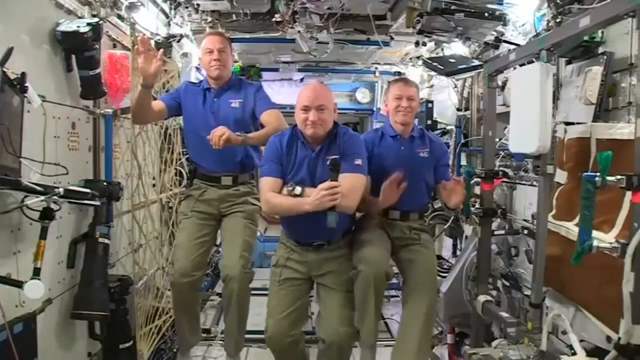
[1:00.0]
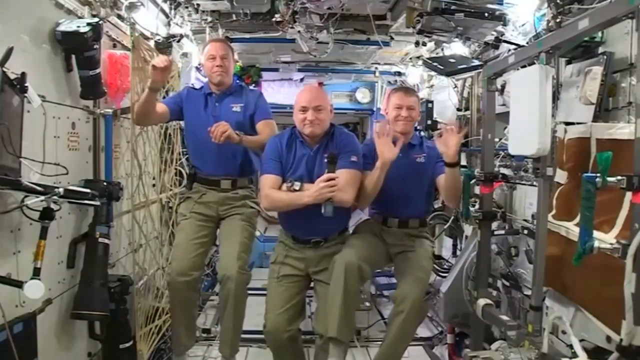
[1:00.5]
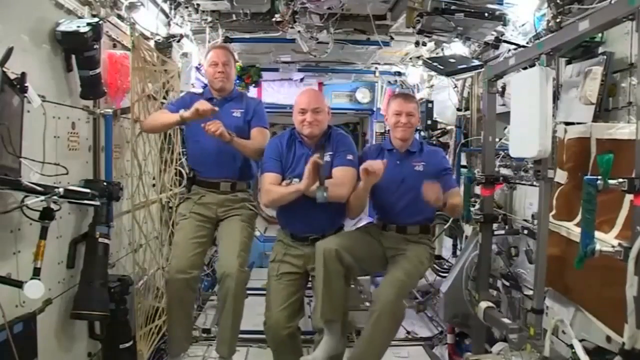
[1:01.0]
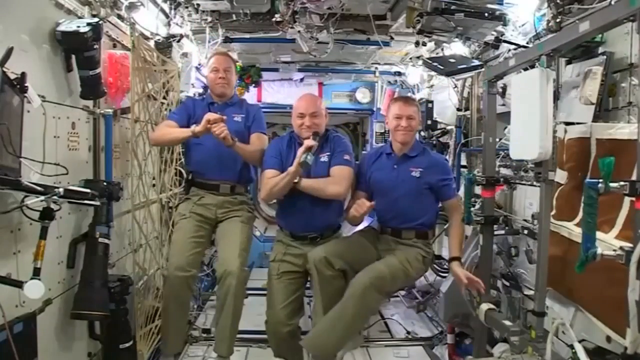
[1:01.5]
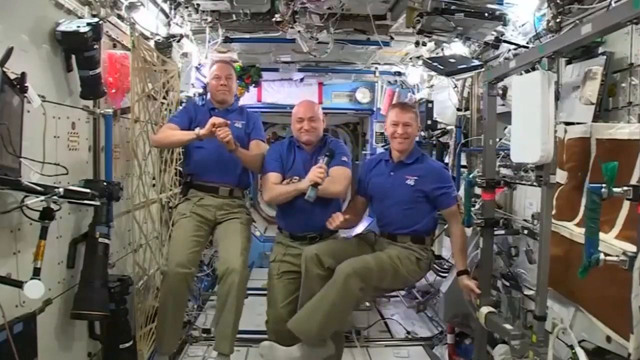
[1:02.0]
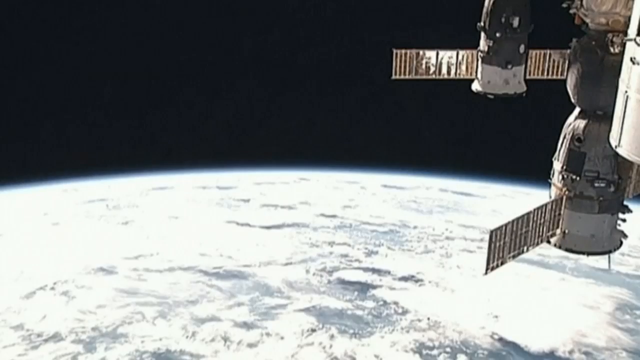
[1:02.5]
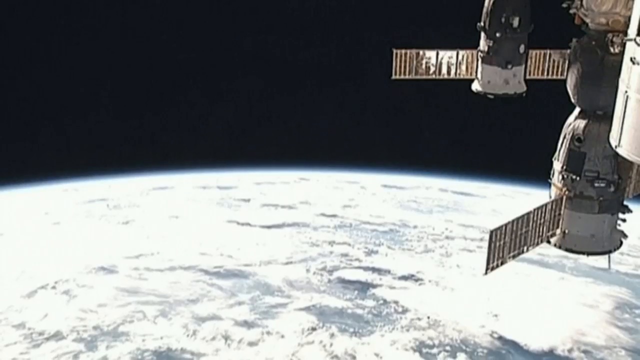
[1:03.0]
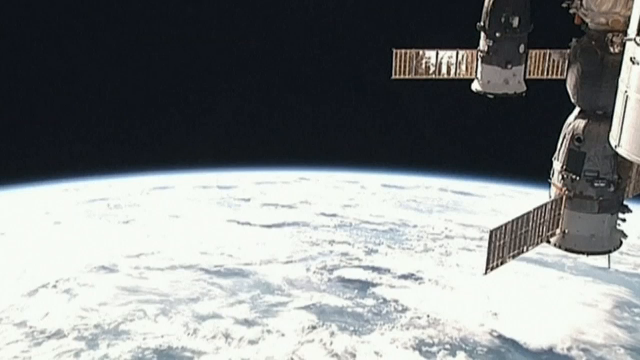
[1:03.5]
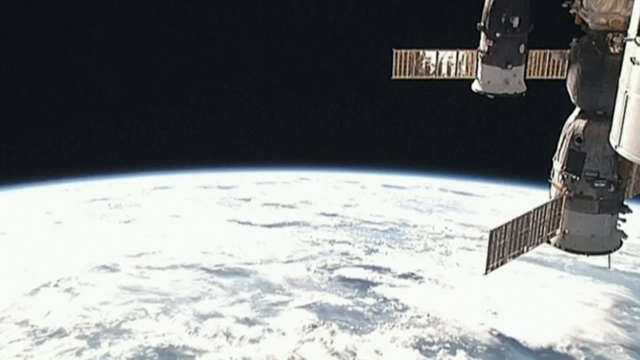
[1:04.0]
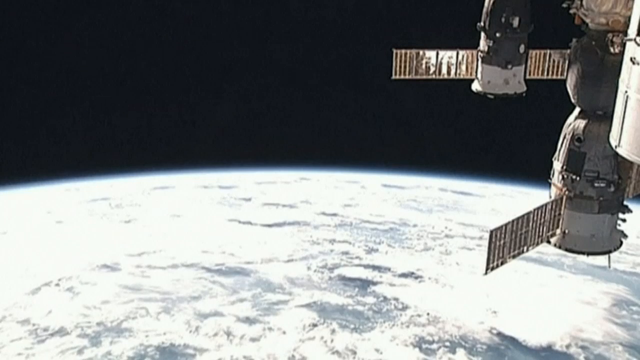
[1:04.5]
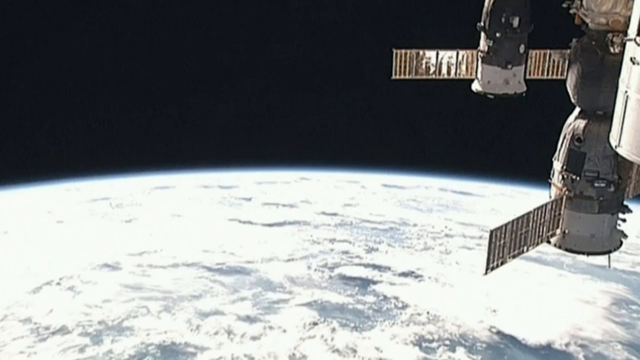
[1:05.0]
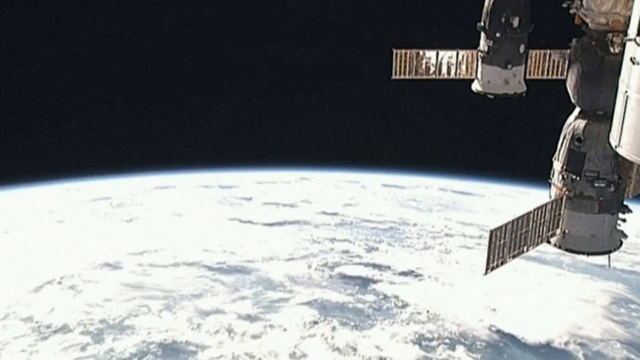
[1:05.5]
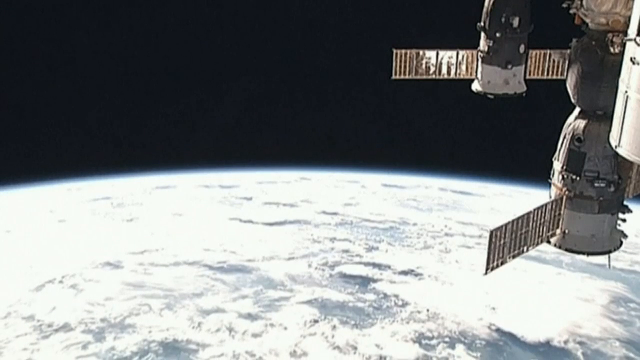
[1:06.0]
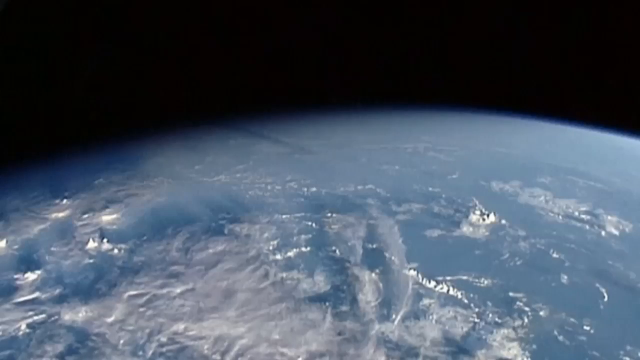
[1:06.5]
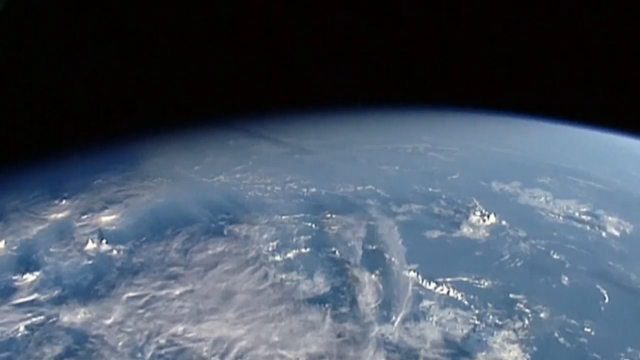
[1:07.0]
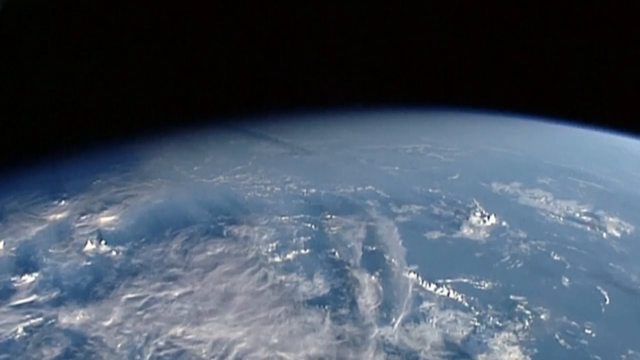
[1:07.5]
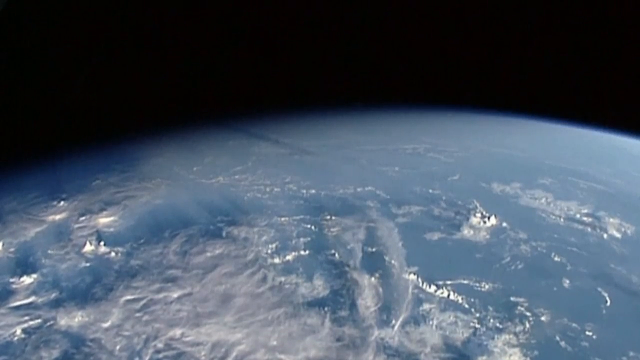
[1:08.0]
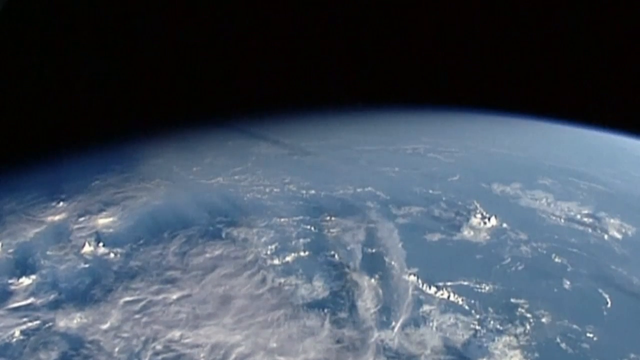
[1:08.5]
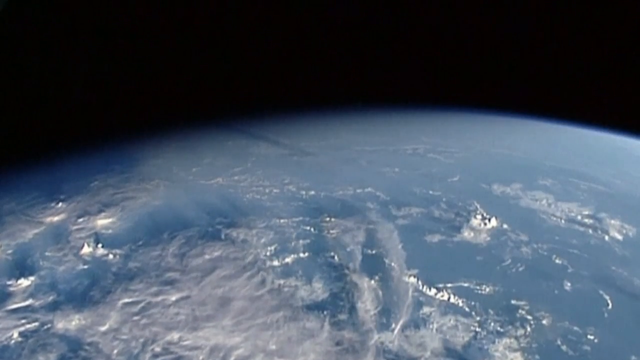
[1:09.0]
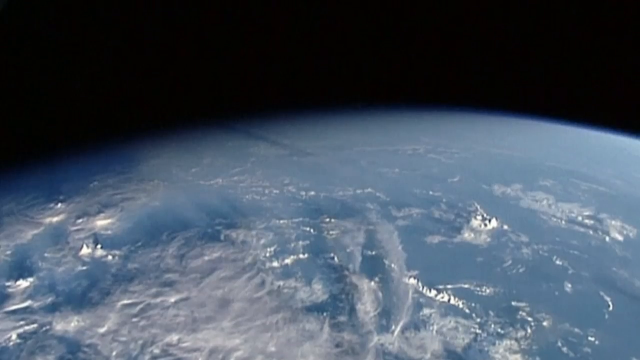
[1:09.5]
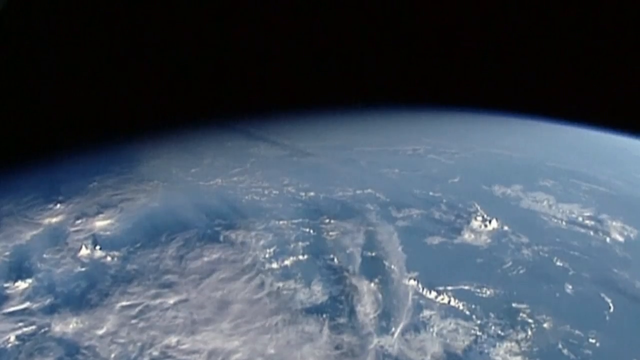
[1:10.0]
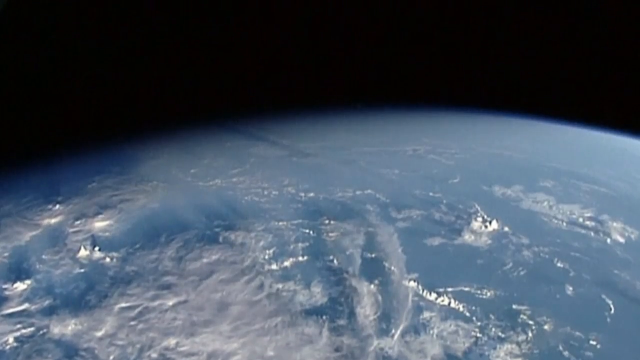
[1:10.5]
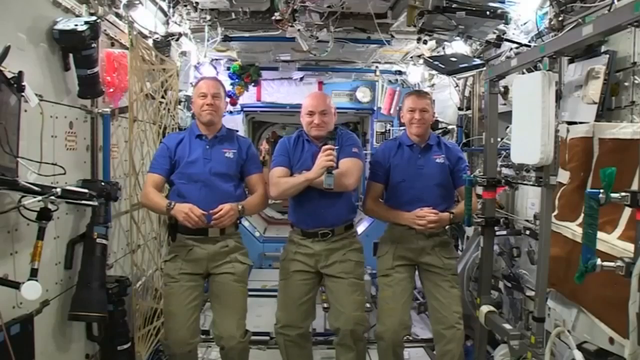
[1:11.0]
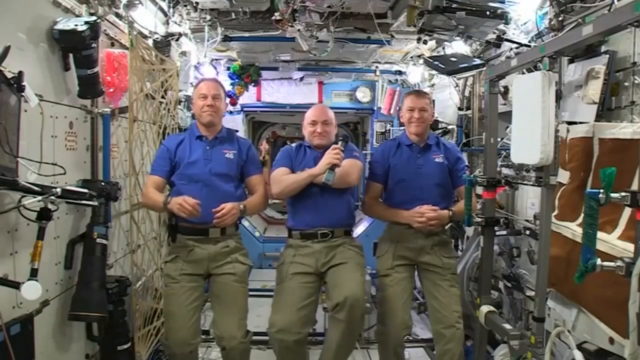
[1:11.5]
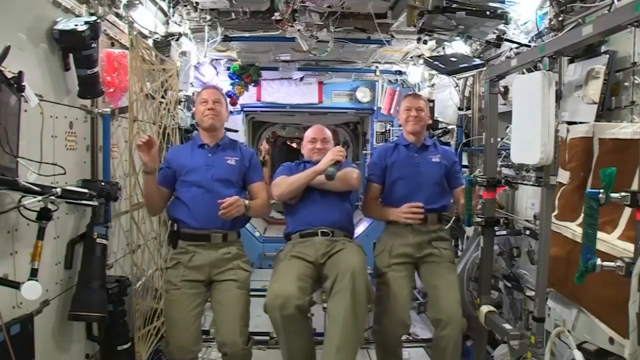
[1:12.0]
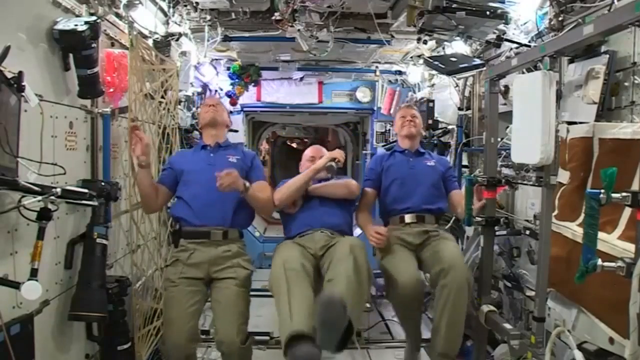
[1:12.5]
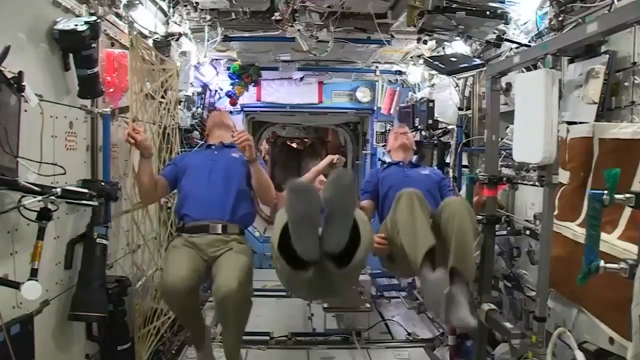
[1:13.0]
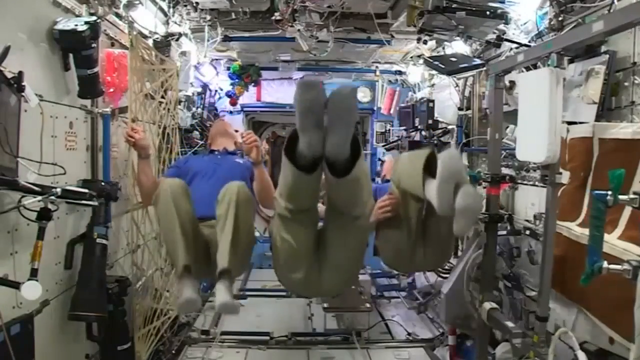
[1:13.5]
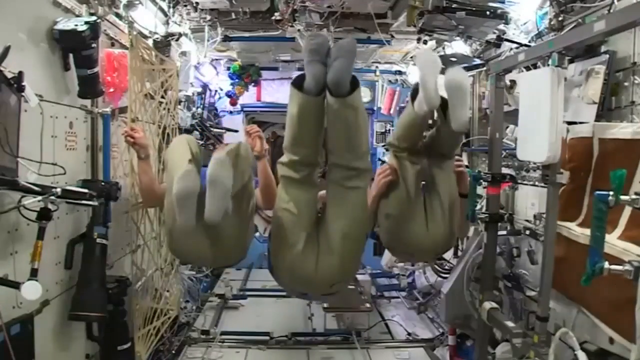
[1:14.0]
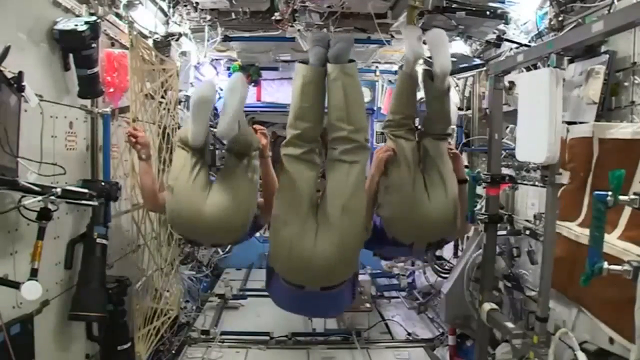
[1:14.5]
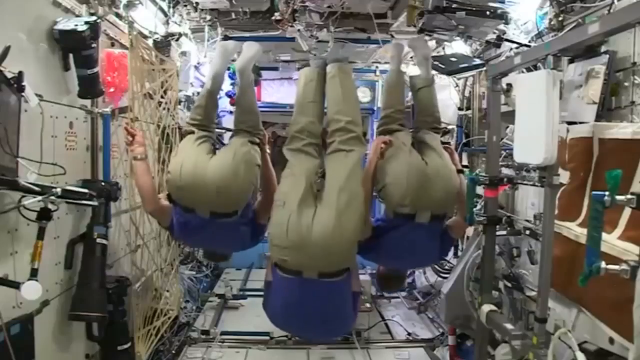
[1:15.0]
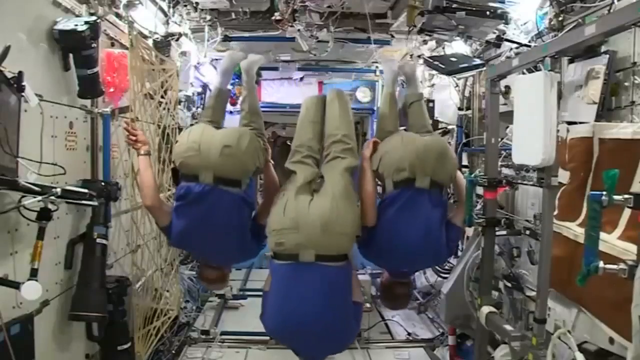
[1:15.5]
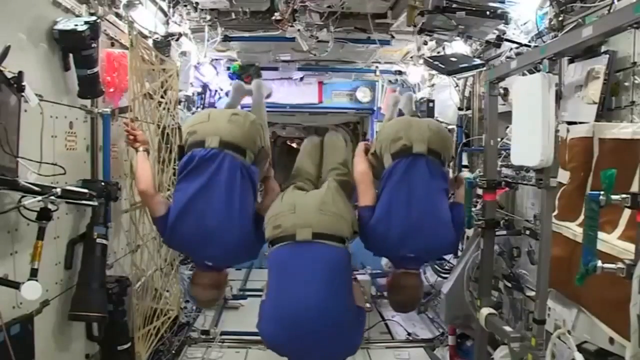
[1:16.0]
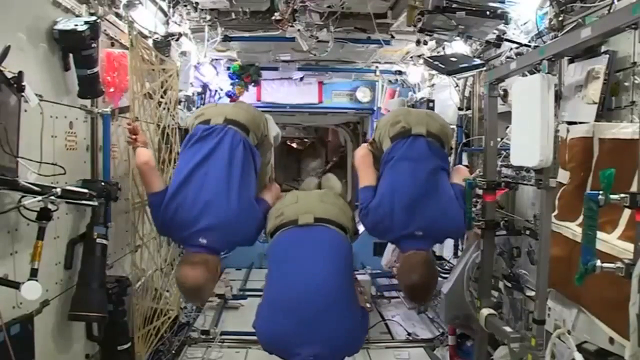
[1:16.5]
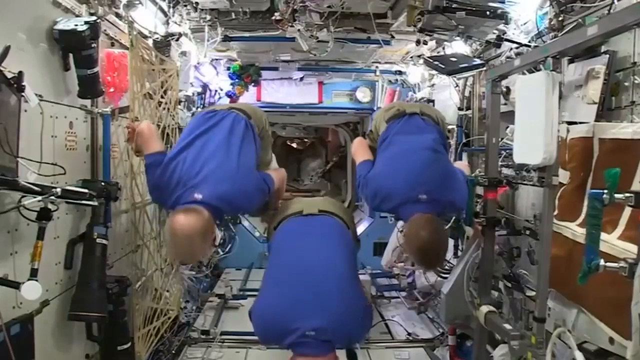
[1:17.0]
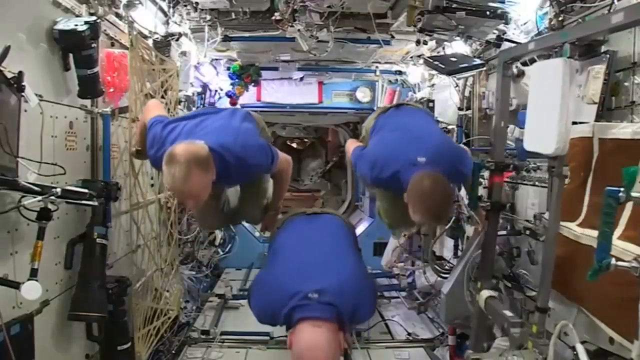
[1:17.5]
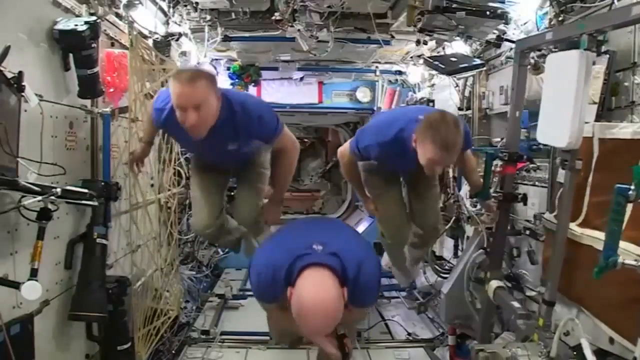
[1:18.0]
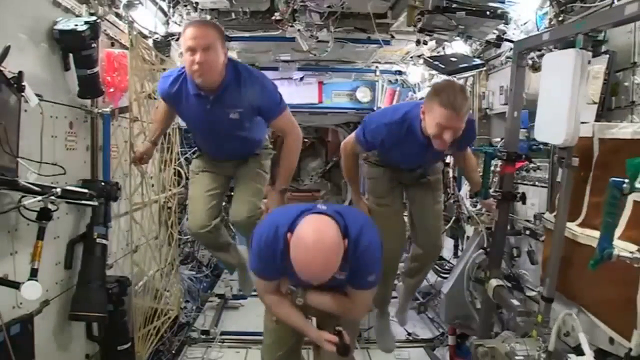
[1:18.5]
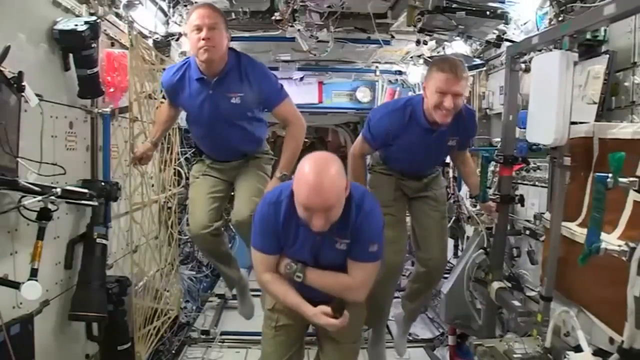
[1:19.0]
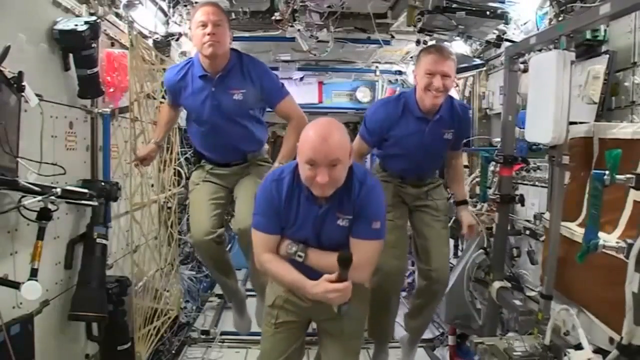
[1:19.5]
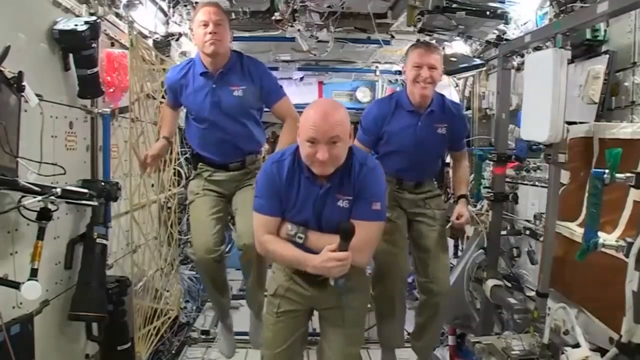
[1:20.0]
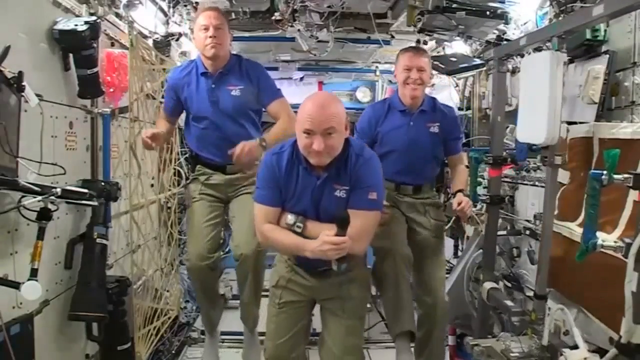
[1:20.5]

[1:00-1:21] The three astronauts are seen immediately after one of their backflips, not lined up very well: the one on the left is a little higher than the others, and the one on the right is slightly off balance. The one on the right waves with both hands and smiles at the camera. Scott Kelly is still holding the microphone and smiling. The astronaut apparently named Tim Kopra kind of holds the netting for balance for a second, smiling. The shot then cuts to an exterior view with a space capsule on the right side of the frame. The upper part of the frame is black, empty outer space with no stars or sun visible. The capsule consists of long cylinders, kind of oval-ish and tapered at the ends, with two or three sections visible and long panels that look like solar panels extending off them at various angles. Another piece of the space station is there; how it is connected is not visible, but it is lined up with the other parts. Beneath this is a good view of Earth, very light at this angle, probably from sunlight, with cloud cover moving slowly. The shot changes to another view of just Earth without the capsule: the blackness of space across the top of the frame and the Earth below, mostly blue with white clouds over it, with shadows visible. It cuts back to the astronauts: Scott Kelly holds the microphone, Tim Kopra holds the beige netting on the left of the frame, and Tim Peake, on the right side of the frame, this time holds the frame so it remains mostly steady instead of bumping it. They finish on a backflip in a mid-action shot, with Scott Kelly not yet finished and leaning forward toward the camera.